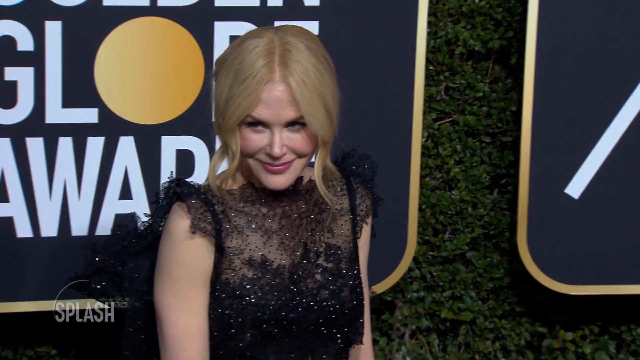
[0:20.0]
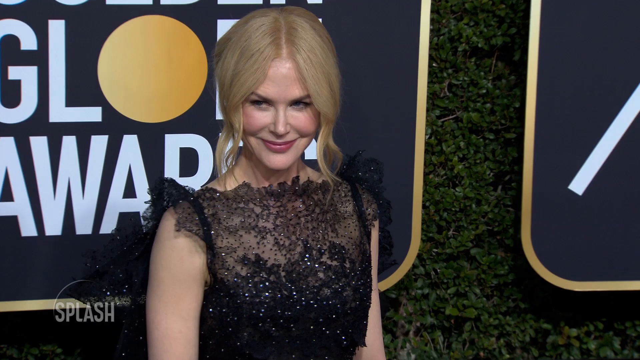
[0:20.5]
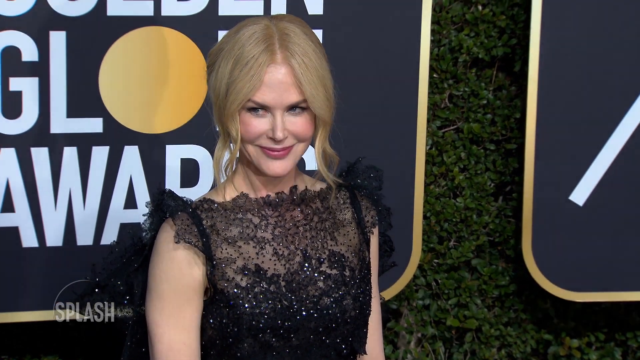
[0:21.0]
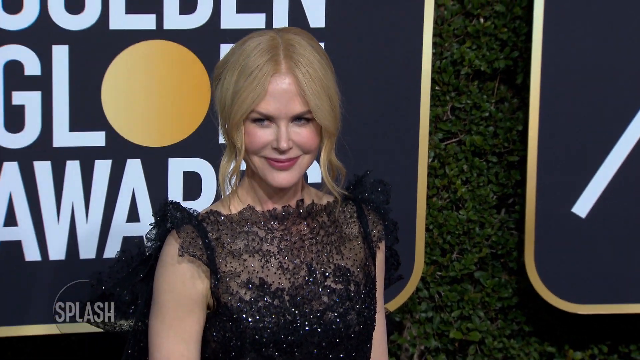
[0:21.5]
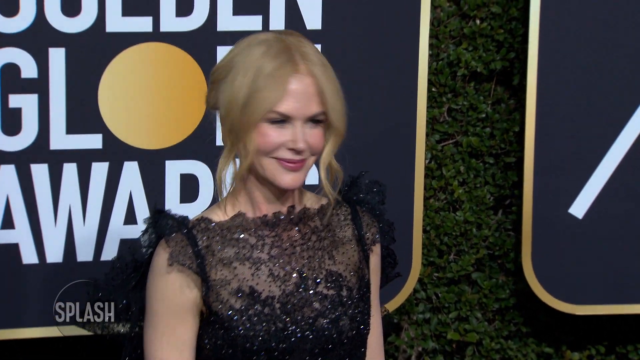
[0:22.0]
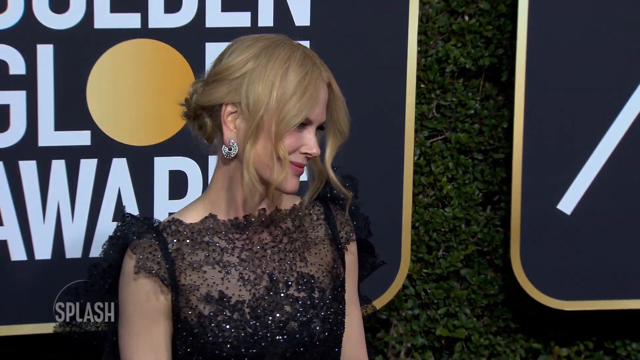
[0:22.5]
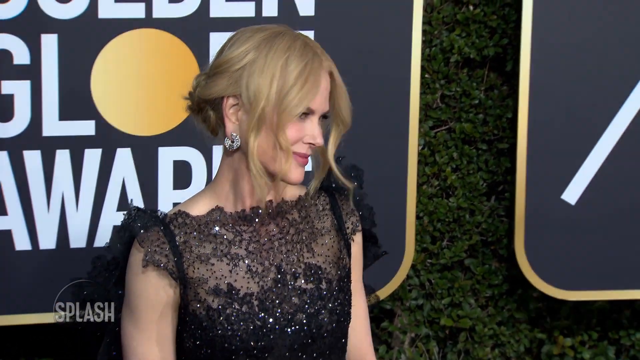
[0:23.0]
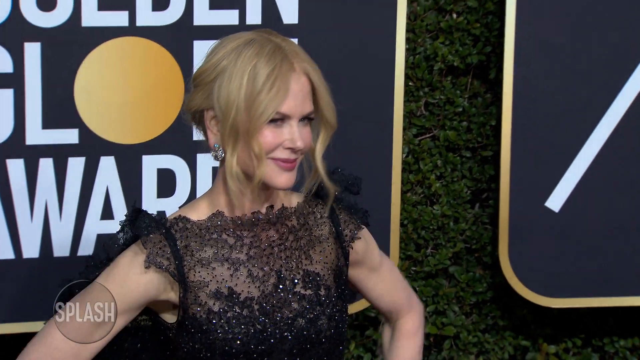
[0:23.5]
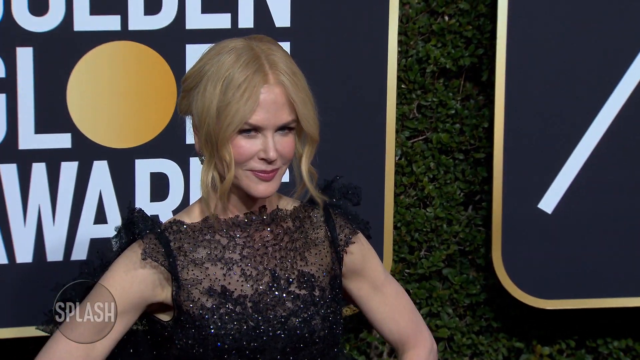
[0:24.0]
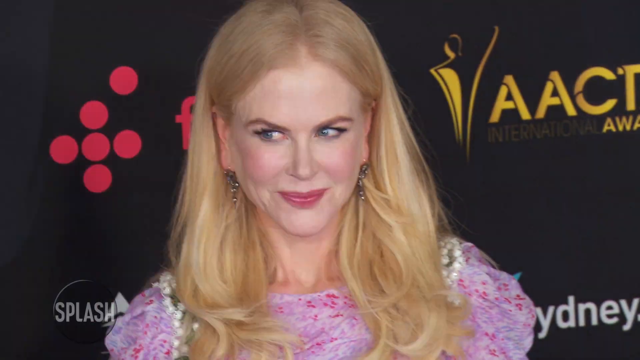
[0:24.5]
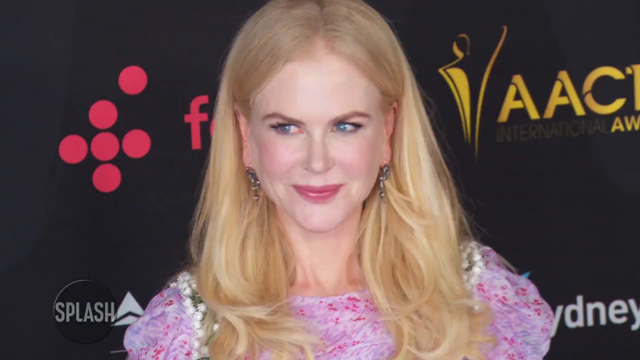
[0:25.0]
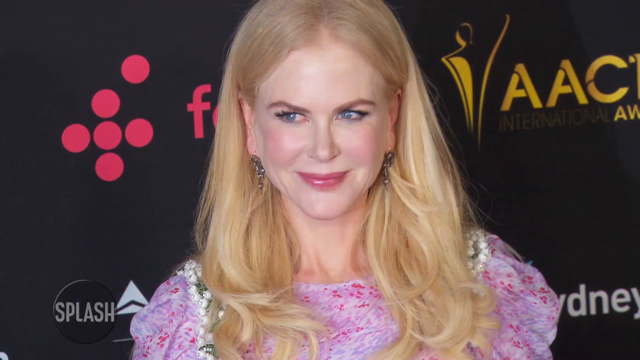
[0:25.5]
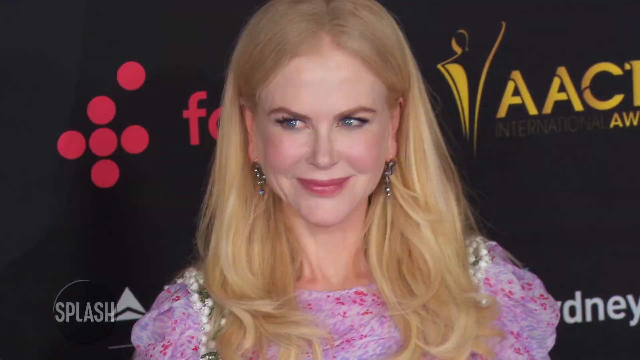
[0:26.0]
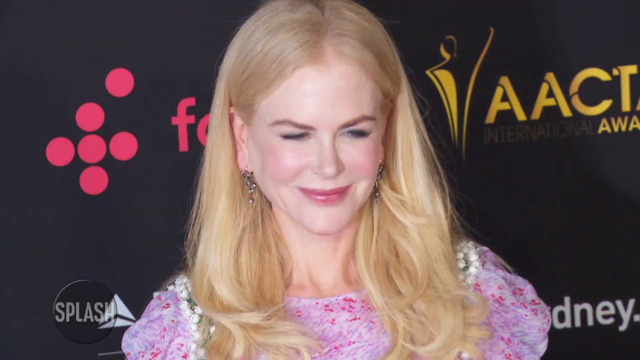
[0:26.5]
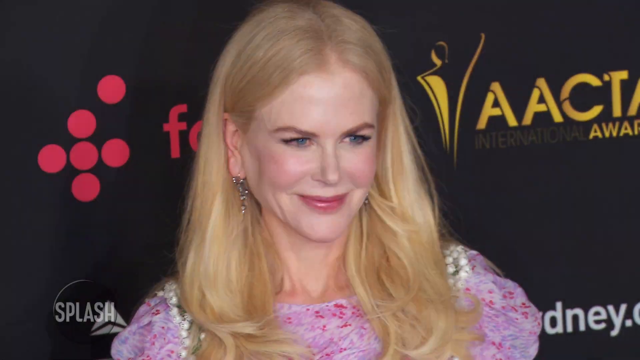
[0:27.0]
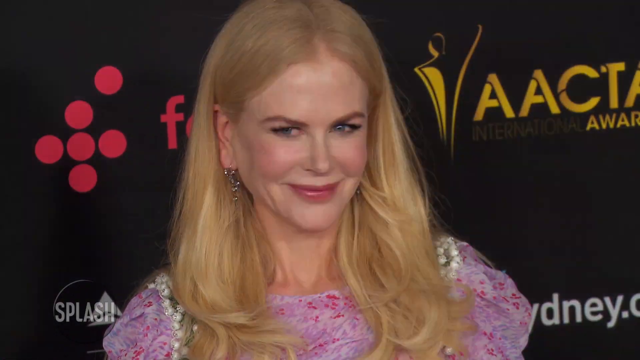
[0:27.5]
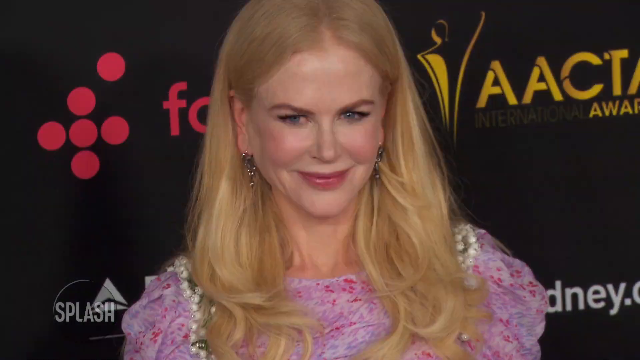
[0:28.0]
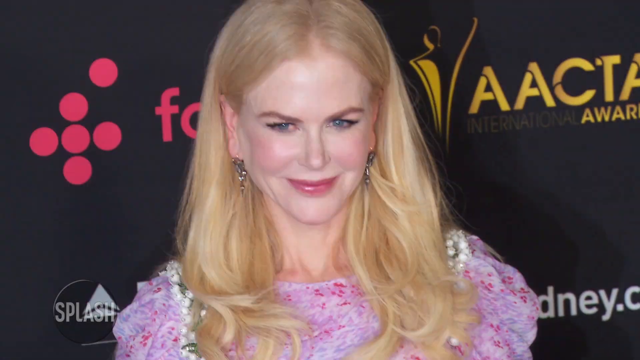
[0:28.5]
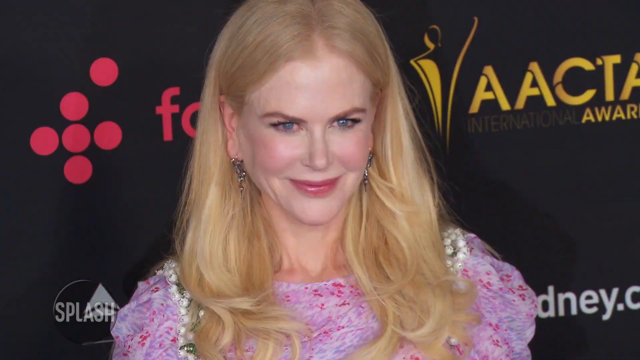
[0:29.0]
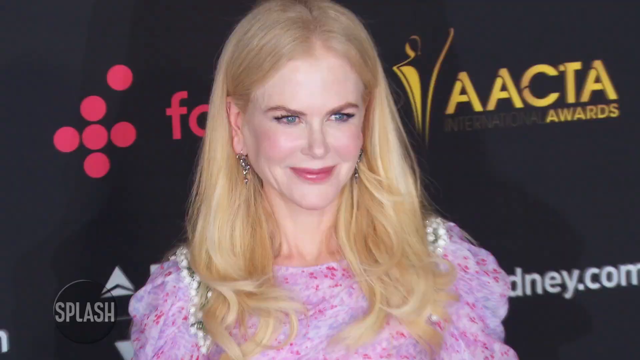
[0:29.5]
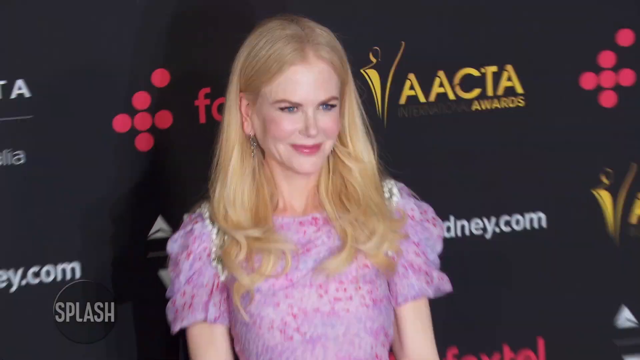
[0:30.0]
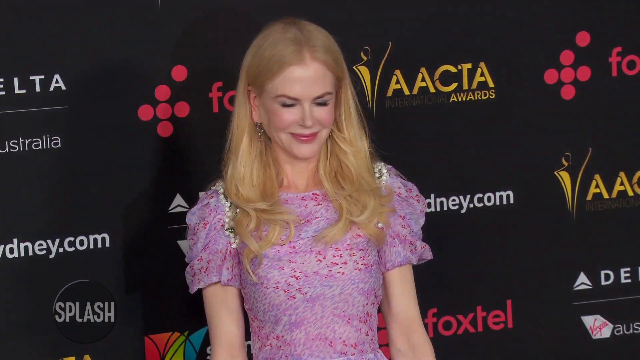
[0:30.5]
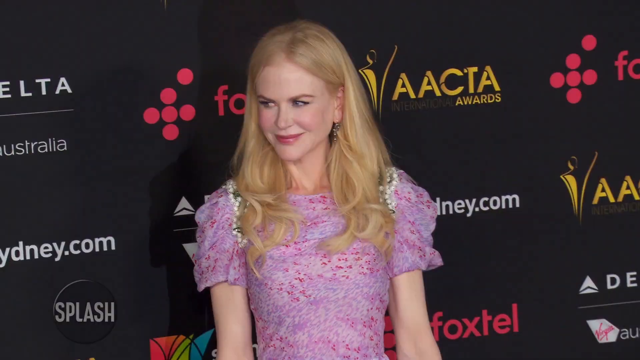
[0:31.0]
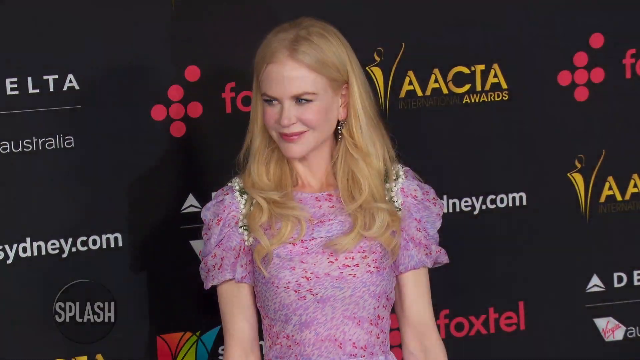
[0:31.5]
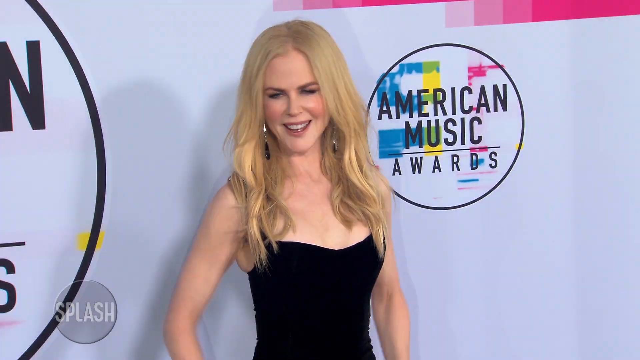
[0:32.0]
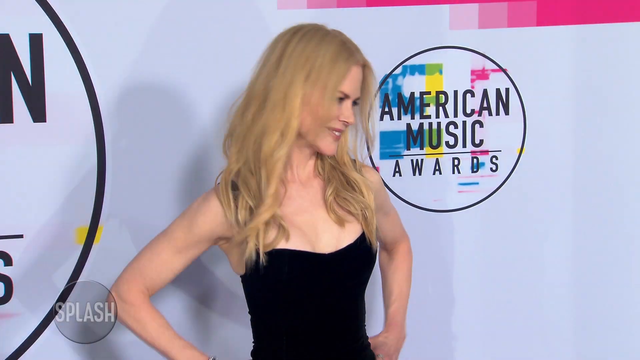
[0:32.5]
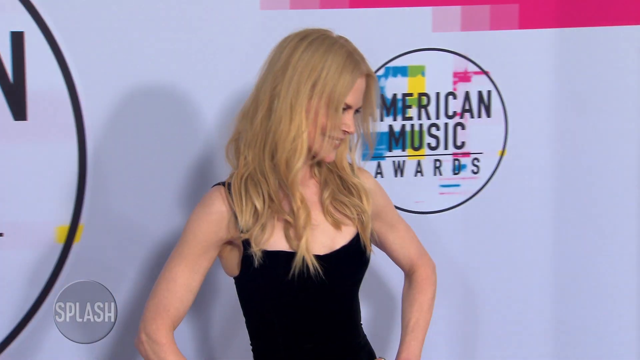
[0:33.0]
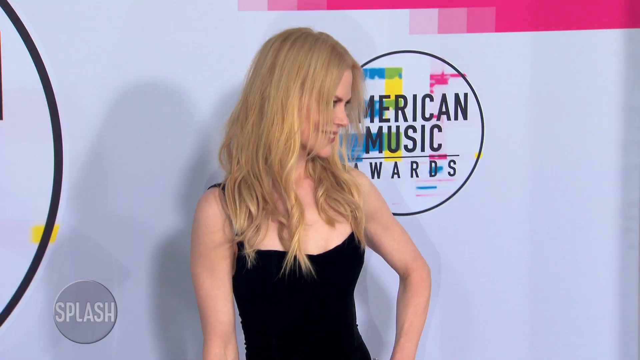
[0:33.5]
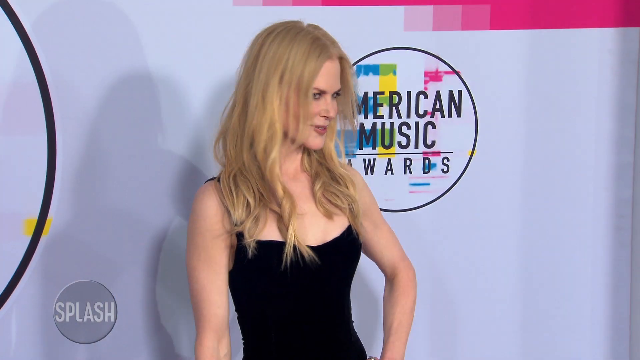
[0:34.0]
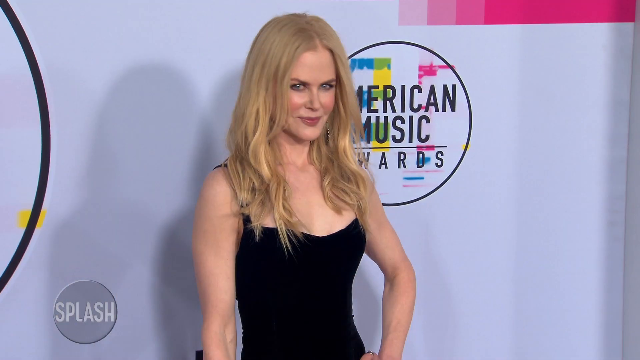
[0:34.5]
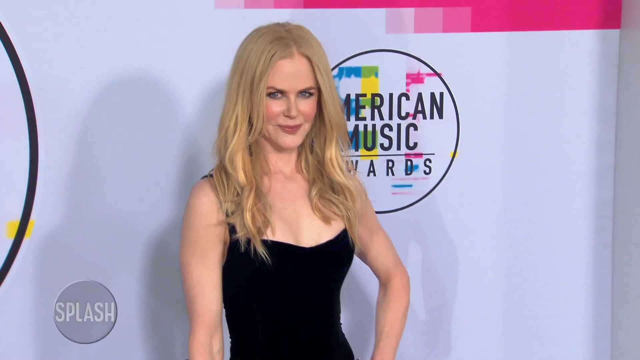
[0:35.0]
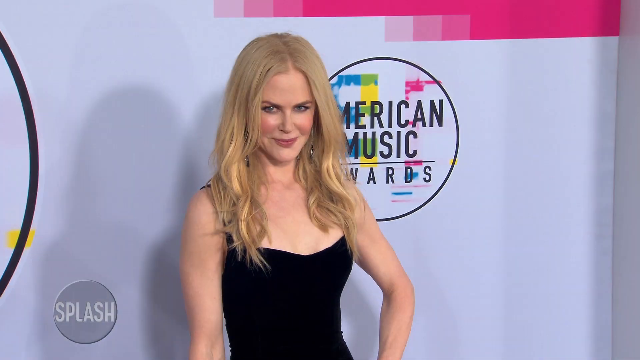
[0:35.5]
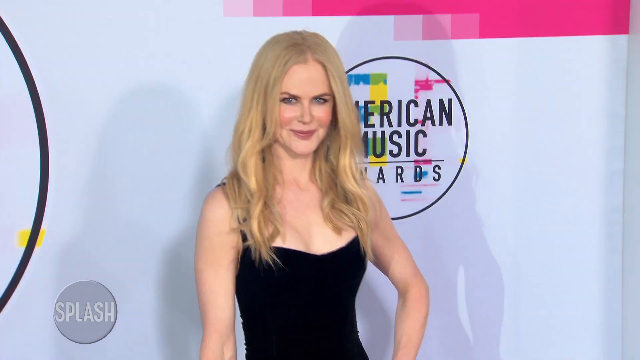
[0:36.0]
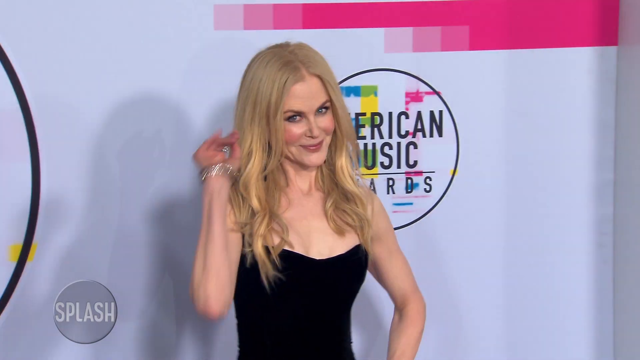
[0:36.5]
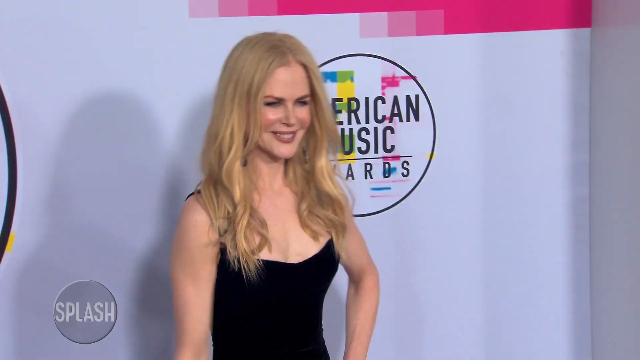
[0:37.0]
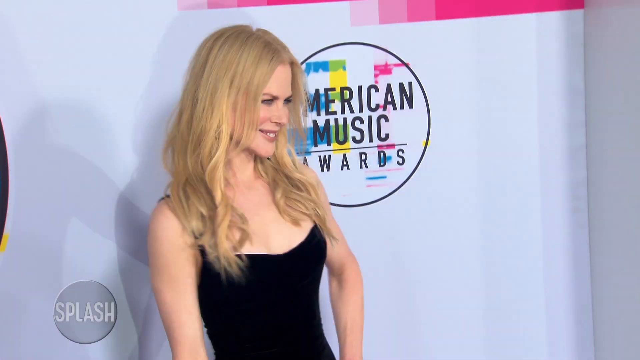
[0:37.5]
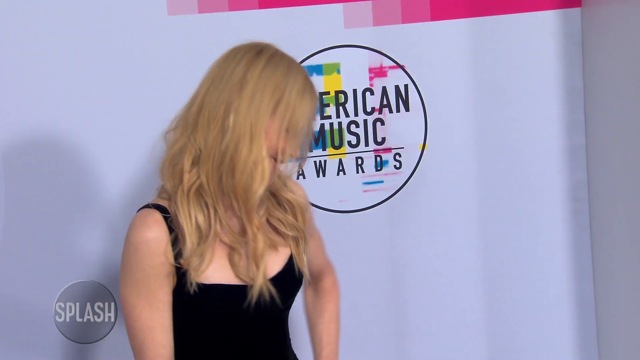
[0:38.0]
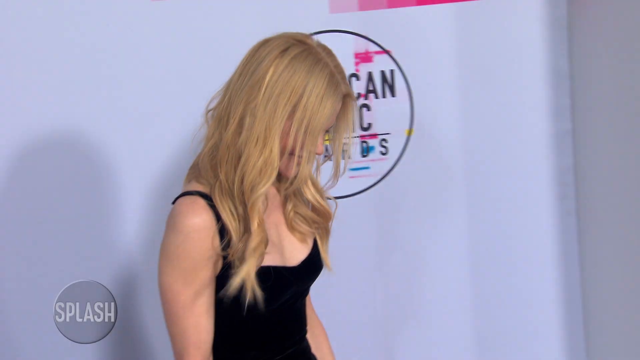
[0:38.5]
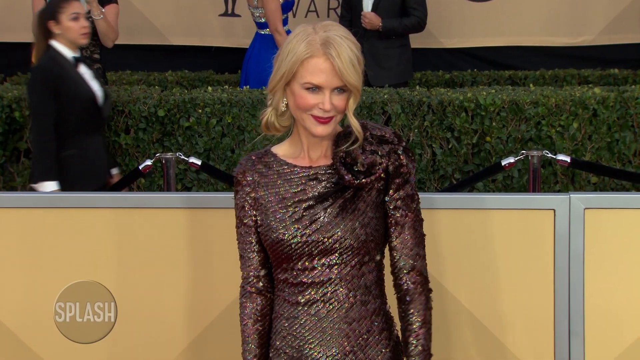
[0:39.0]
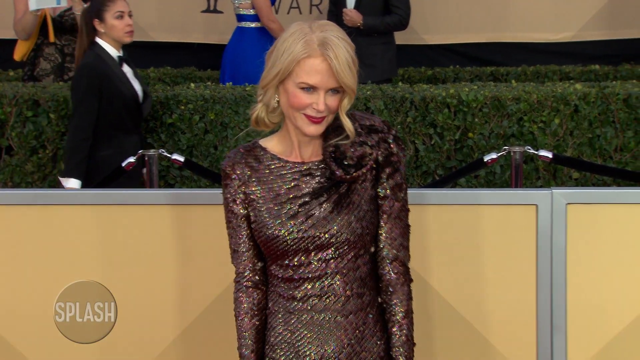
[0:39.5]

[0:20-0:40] The video continues to focus on the young woman, who has white hair and a smile, as she poses in different styles for videos and pictures. Camera flashes go off, and the lights hit the wall and reflect on her face. She takes a different posture as people hold cameras. She then appears against another background in a white outfit with red spots, her long white hair lying on her back; behind her is a black surface with advertisements of companies, and she poses for videos and pictures. In yet another outfit she poses and smiles, with an American Music Award behind her. She is apparently a musician. The camera focuses only on her as she poses for videos and pictures.